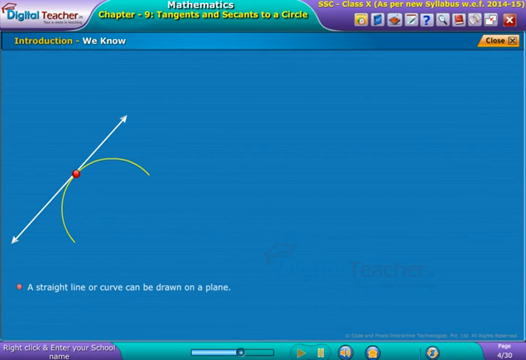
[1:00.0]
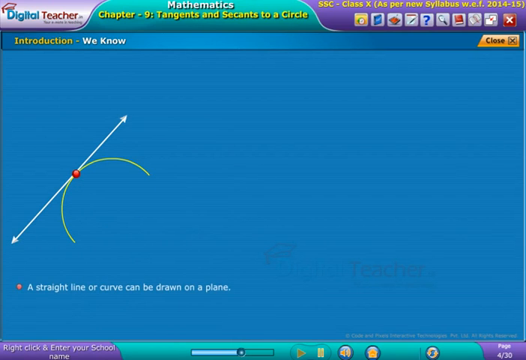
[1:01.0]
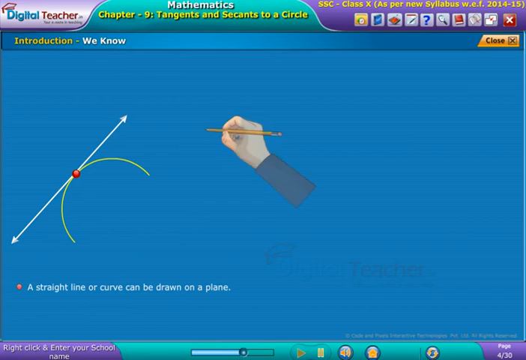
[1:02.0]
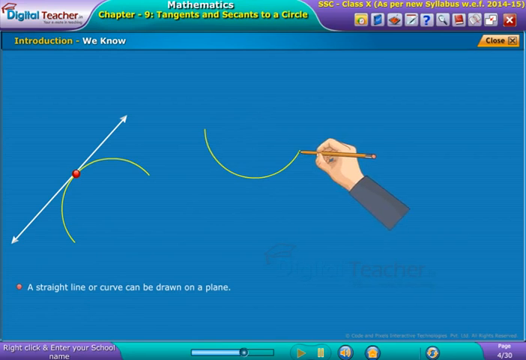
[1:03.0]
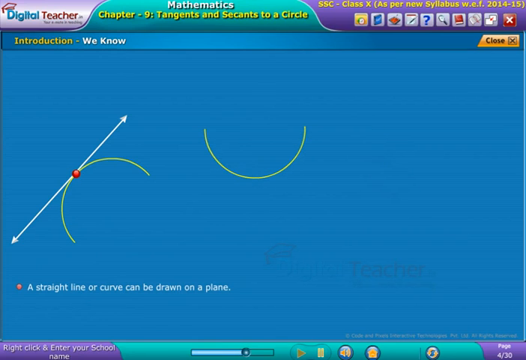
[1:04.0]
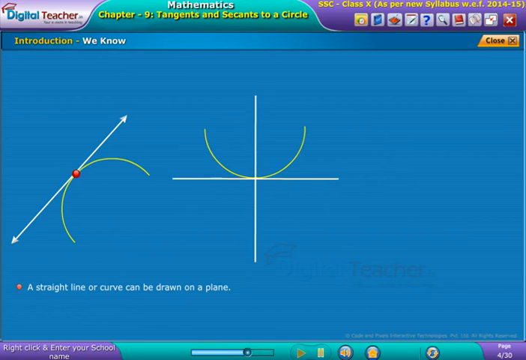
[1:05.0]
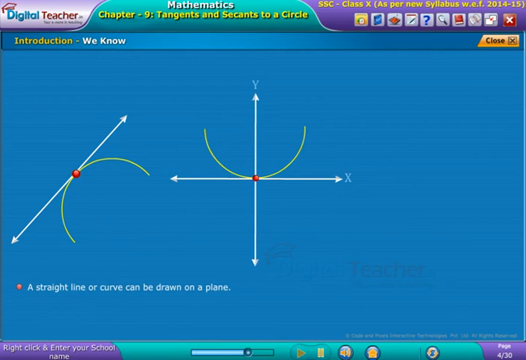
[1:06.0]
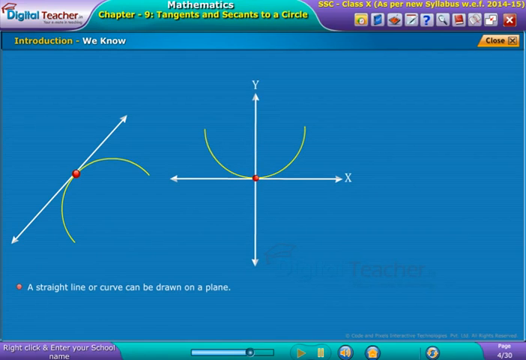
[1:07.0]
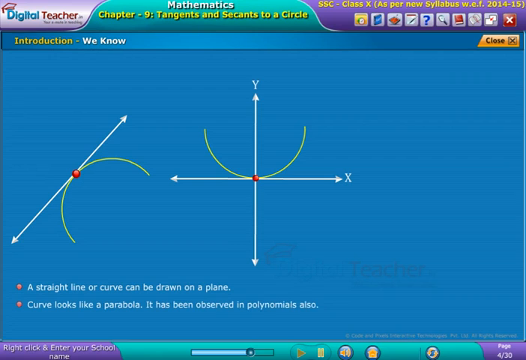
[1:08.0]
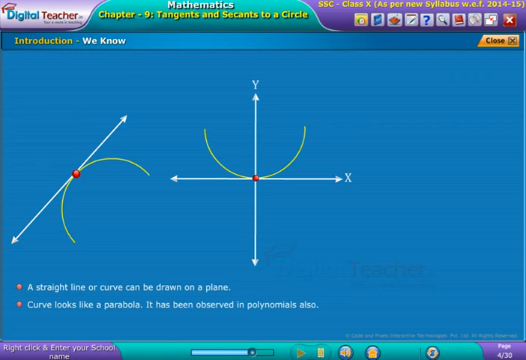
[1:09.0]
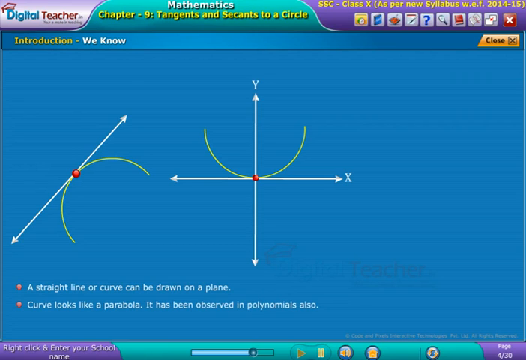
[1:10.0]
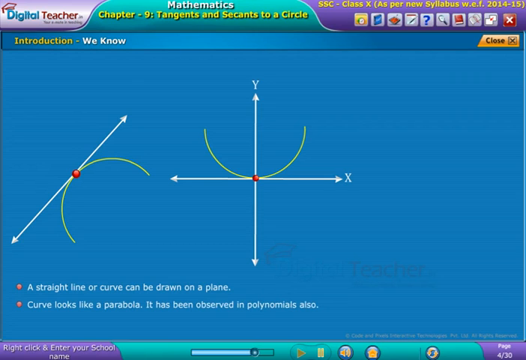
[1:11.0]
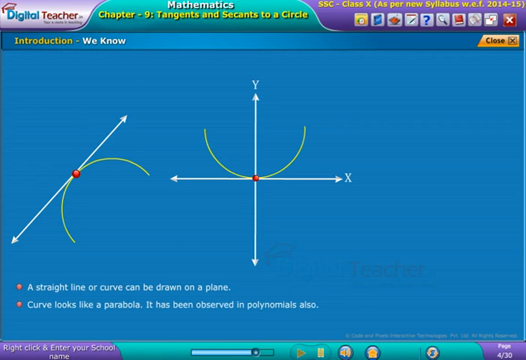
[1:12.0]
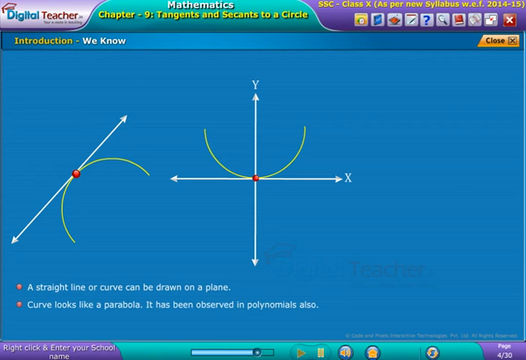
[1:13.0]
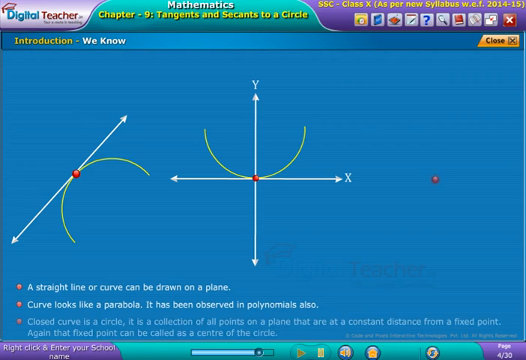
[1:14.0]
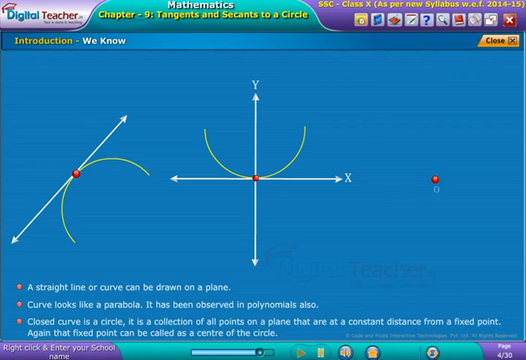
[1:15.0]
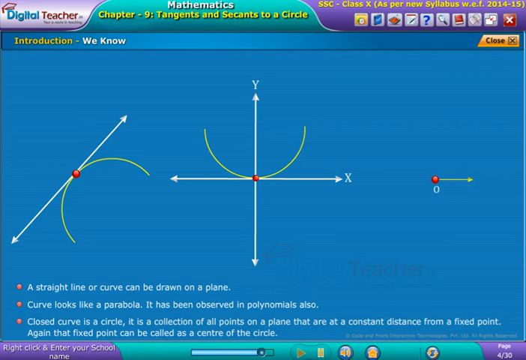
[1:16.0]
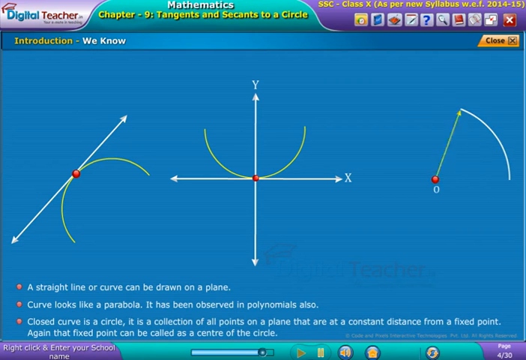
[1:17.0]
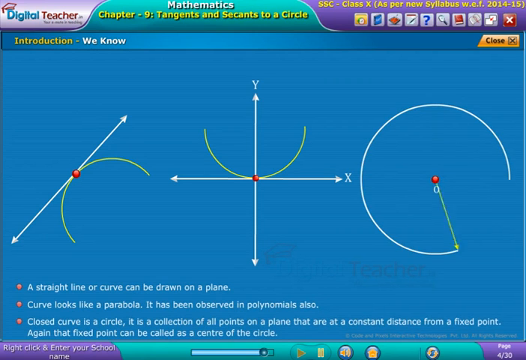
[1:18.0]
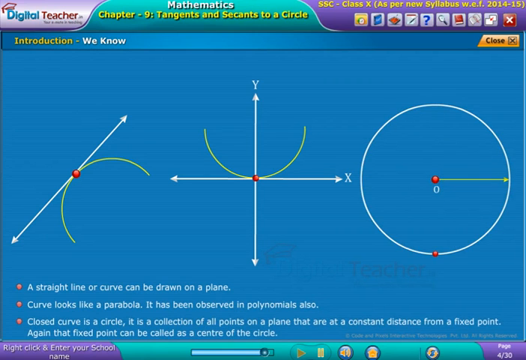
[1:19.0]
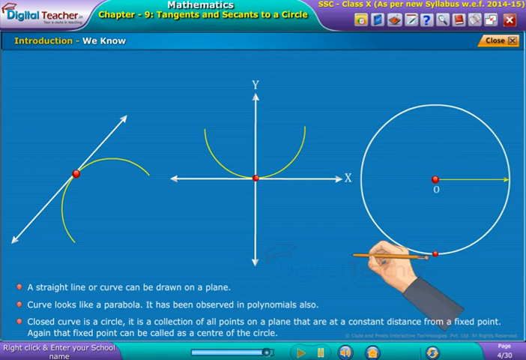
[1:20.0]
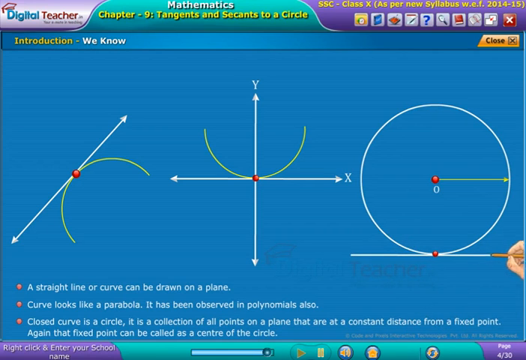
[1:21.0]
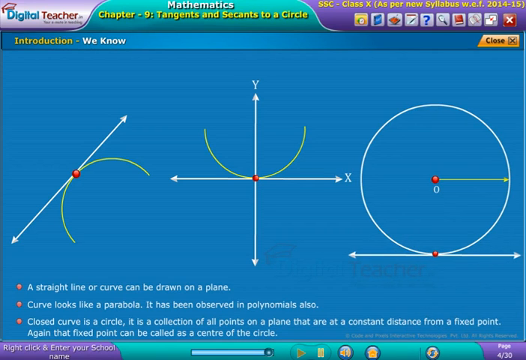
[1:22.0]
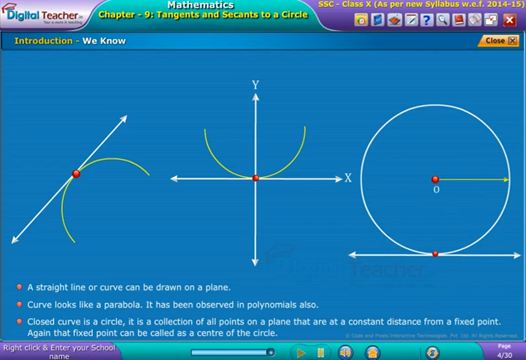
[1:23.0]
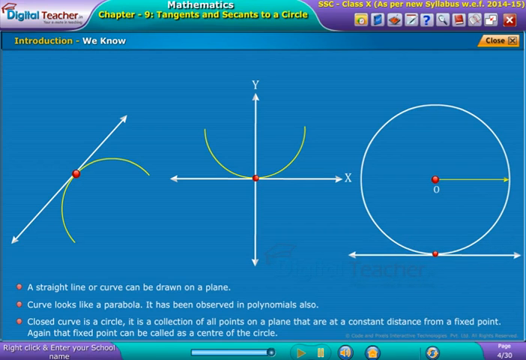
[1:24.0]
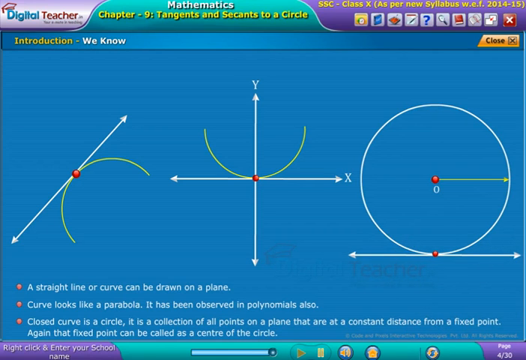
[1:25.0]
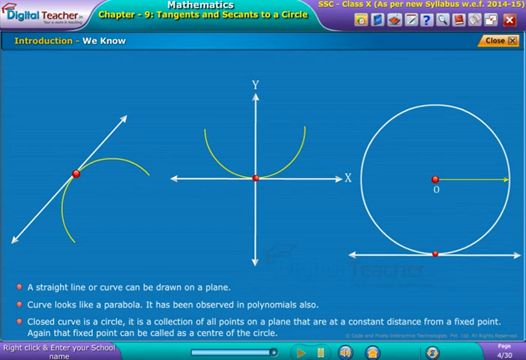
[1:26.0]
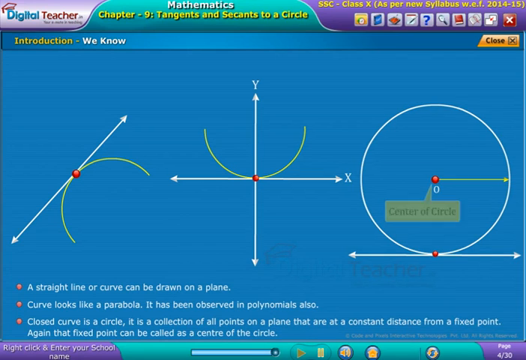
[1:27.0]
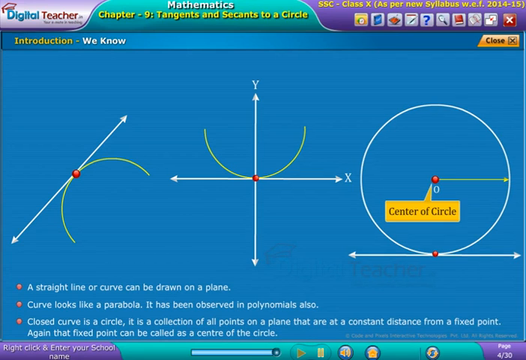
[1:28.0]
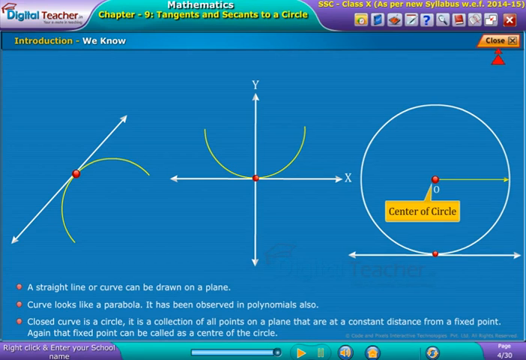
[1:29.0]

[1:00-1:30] More basic shapes are used to show intersection points and curves on planes. The far left one shows that a straight line or curve can be drawn on a plane, with a curved line at the bottom of a sort of top-right angled line, curving down below it. The middle one has a cross-shaped middle section with a U-shaped yellow half-circle line in the middle, kind of curving up to the y axis and kind of evenly going across the x axis and y axis. A bullet point appears reading "a curve looks like a parabola and has been observed in polynomials too." A third line begins to form.